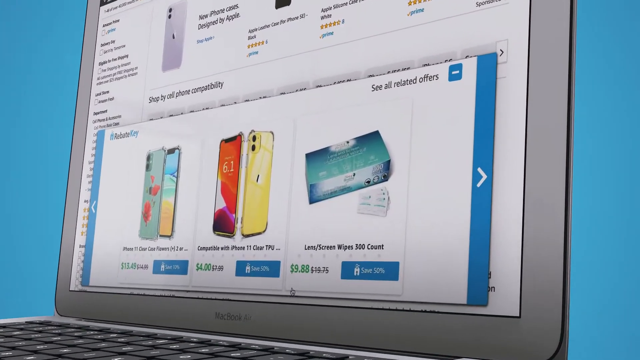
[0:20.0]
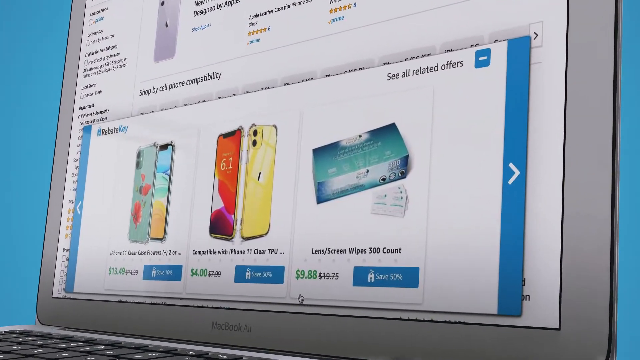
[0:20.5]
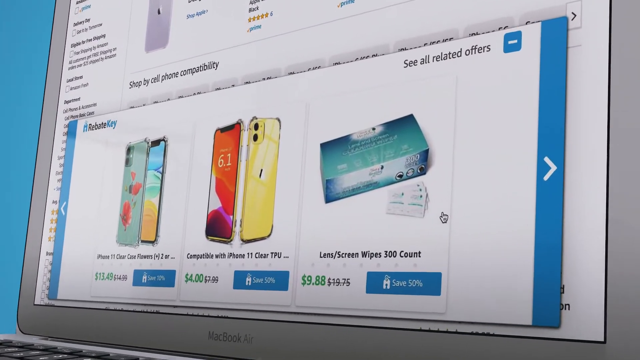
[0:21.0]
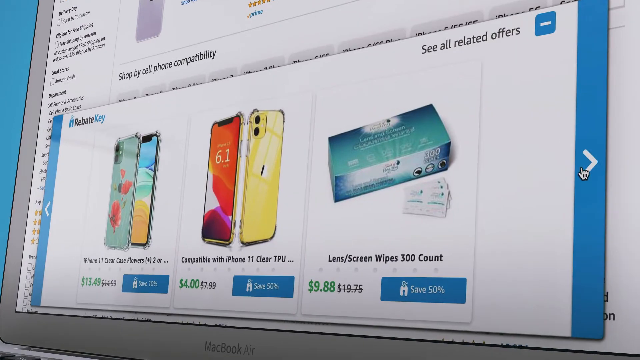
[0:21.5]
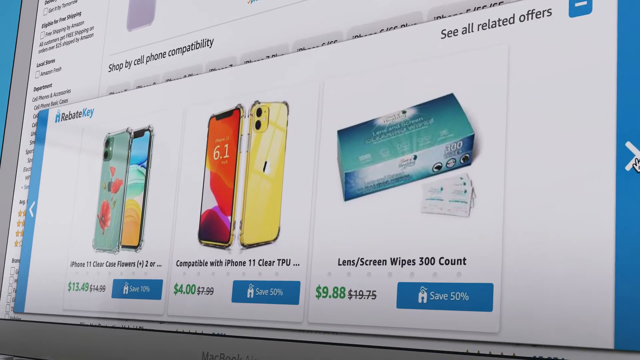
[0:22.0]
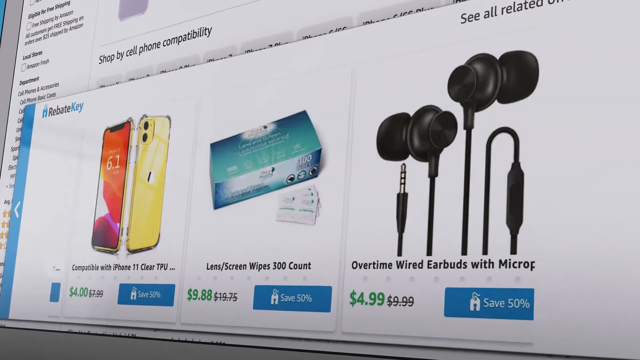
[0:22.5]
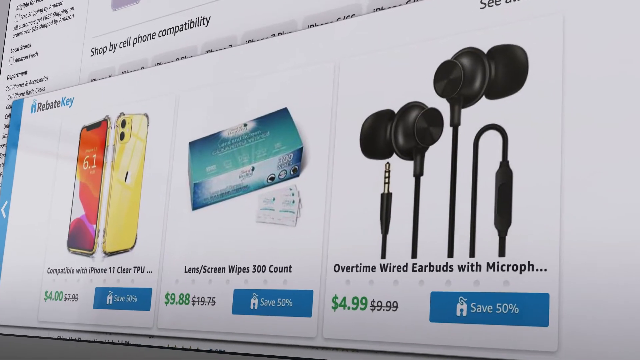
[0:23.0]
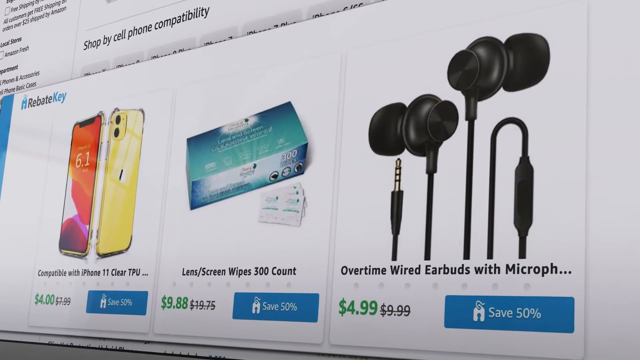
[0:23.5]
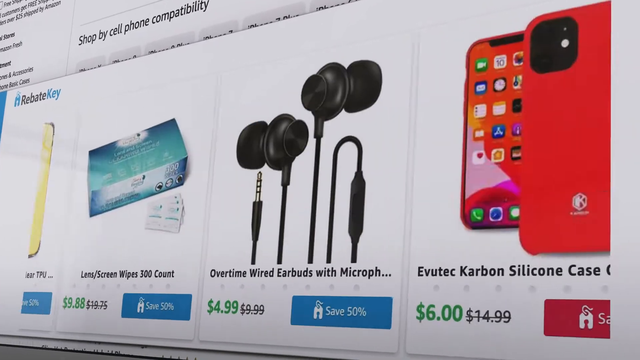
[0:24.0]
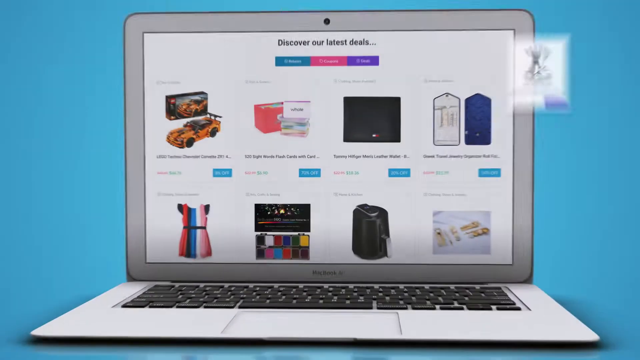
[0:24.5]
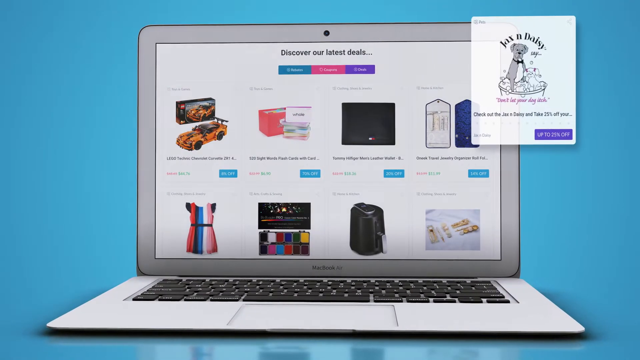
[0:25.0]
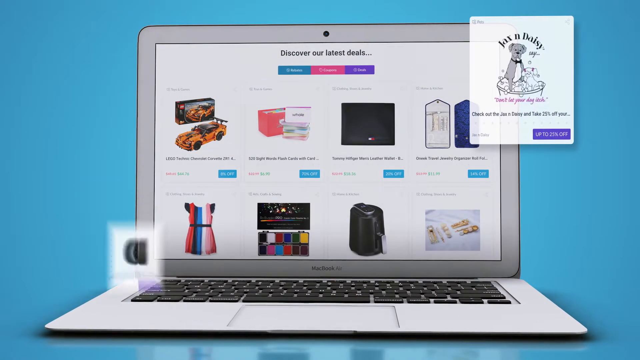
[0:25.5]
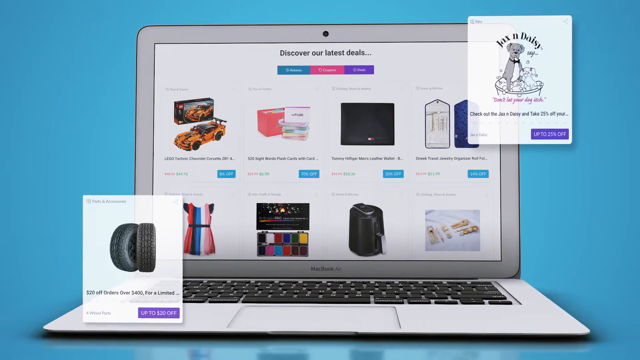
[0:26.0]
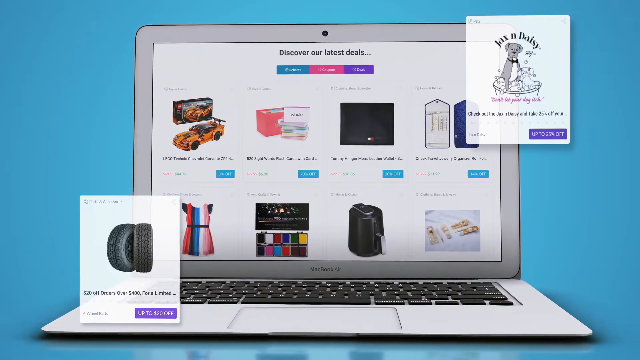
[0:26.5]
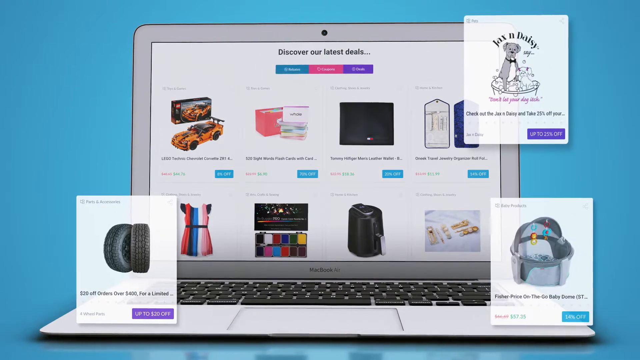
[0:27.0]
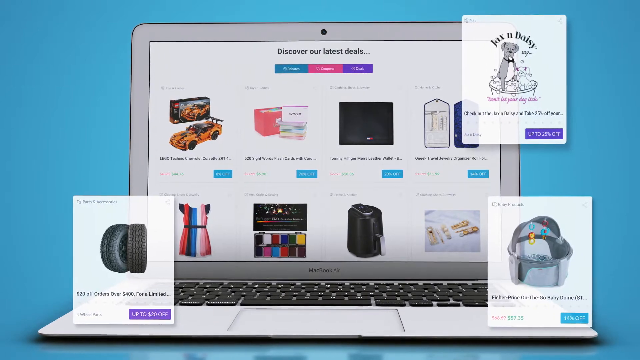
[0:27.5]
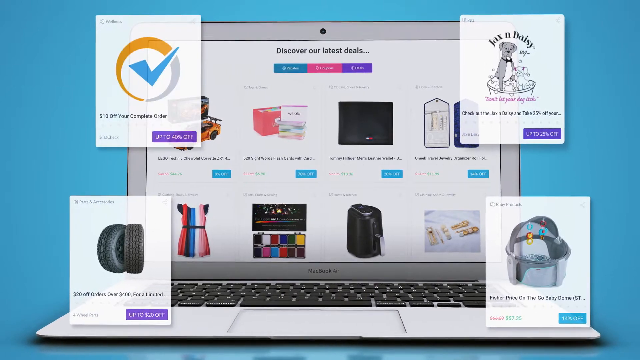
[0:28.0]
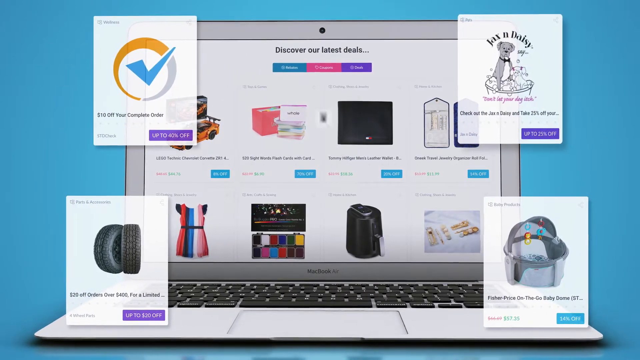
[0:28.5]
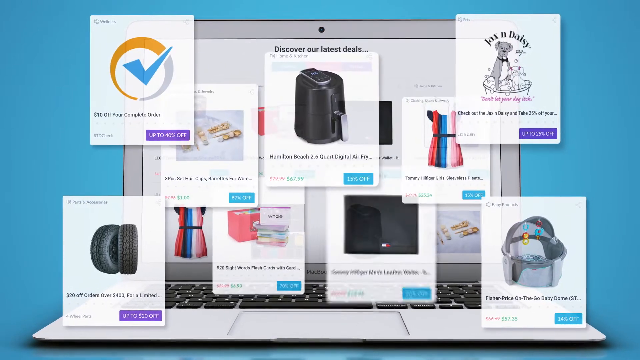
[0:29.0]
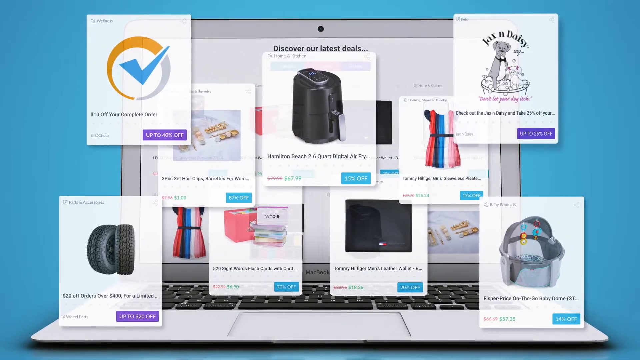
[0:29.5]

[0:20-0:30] The video is an ad for rebates from something called RebateKey. Text says "don't bother clipping coupons anymore or sending in UPCs" and that rebates can be had on RebateKey instead, adding "you'll get a check in the mail." Various products are shown, such as some sort of screen wipes for lenses, what appears to be a phone case, wired earbuds with a microphone, tires, dog washing, and other unidentified items.